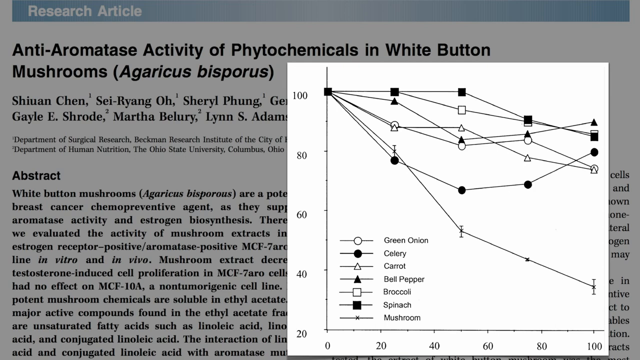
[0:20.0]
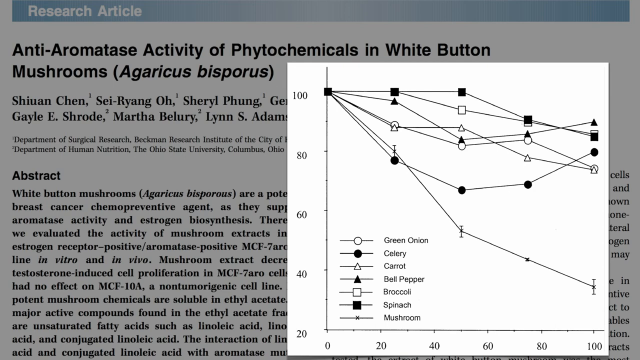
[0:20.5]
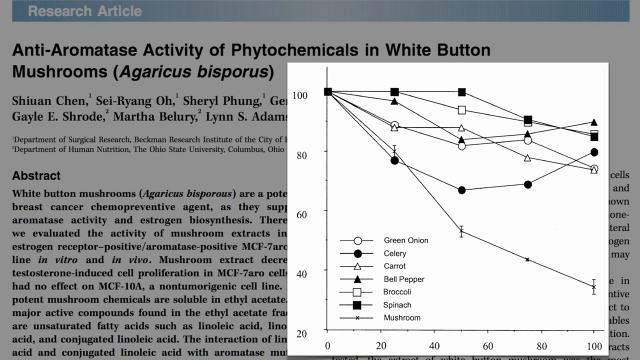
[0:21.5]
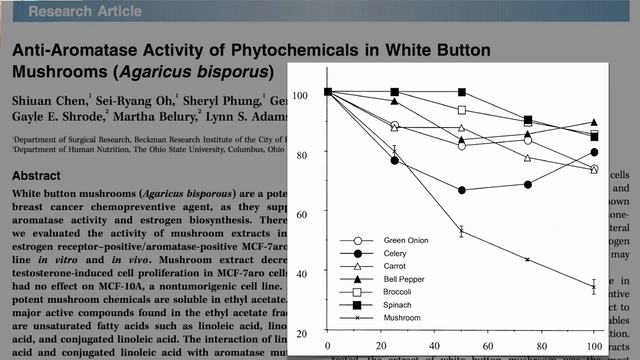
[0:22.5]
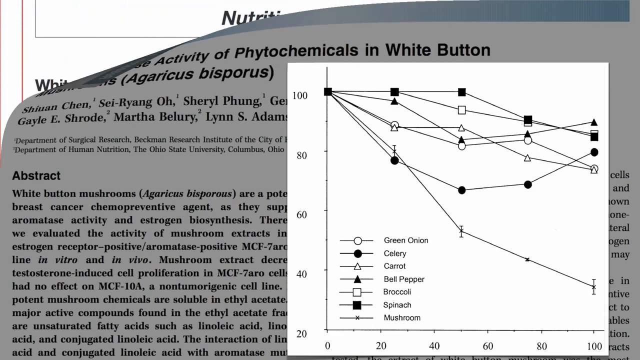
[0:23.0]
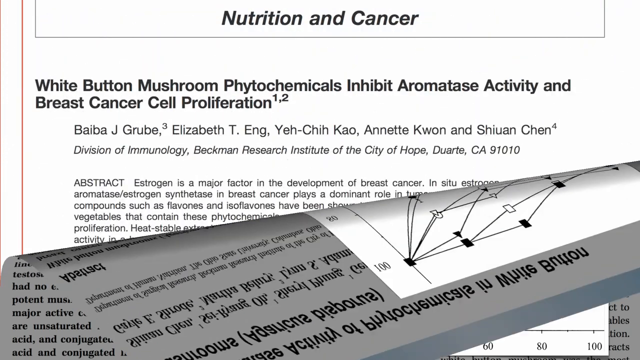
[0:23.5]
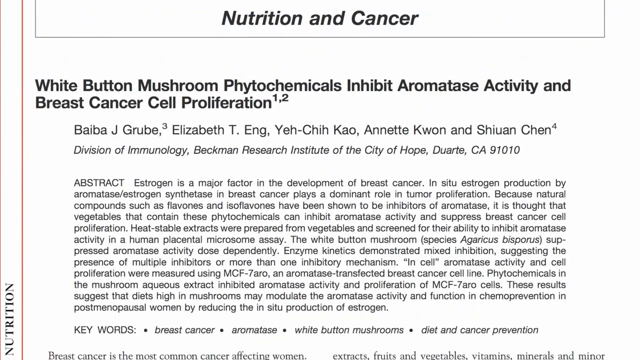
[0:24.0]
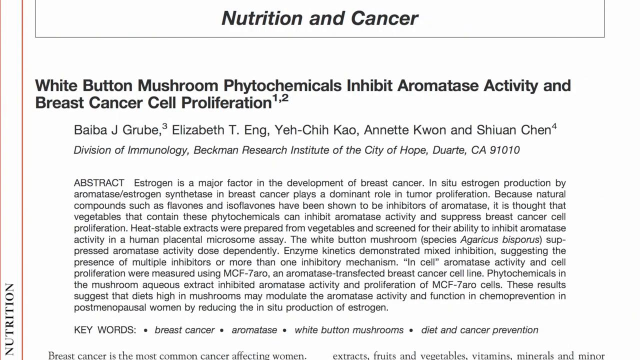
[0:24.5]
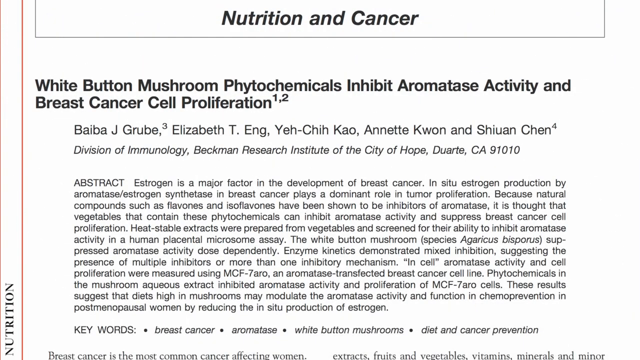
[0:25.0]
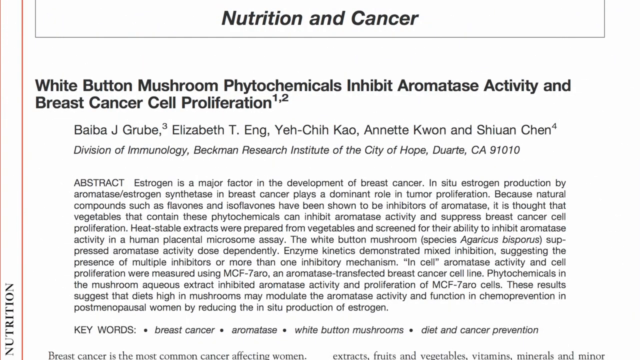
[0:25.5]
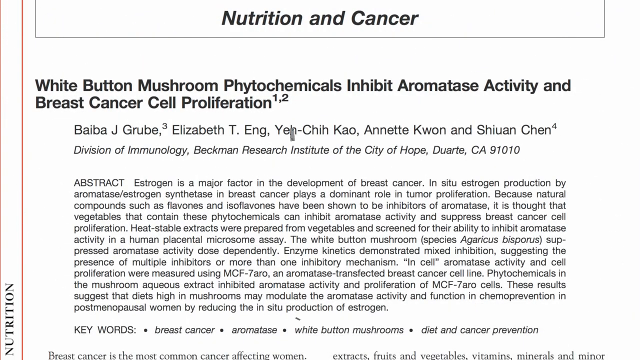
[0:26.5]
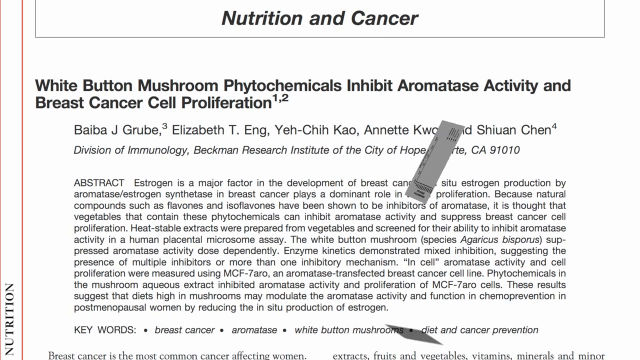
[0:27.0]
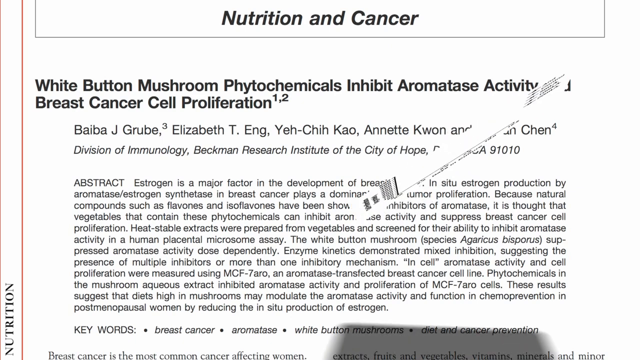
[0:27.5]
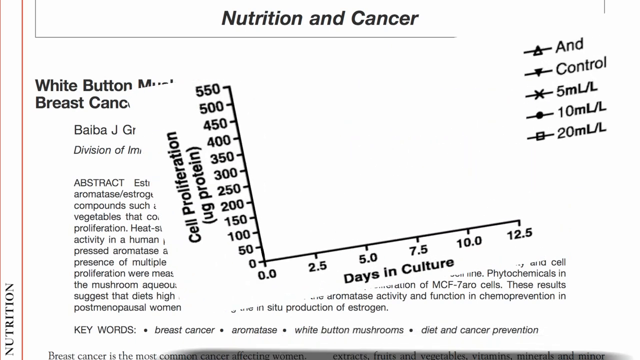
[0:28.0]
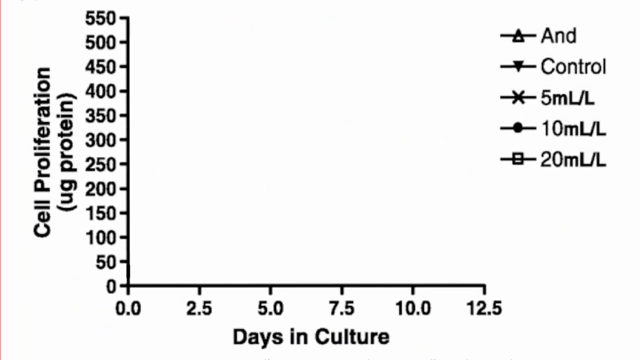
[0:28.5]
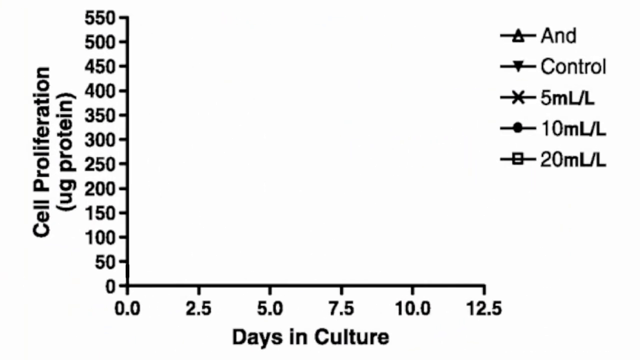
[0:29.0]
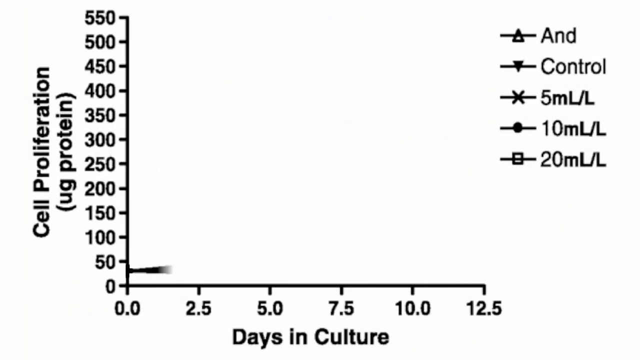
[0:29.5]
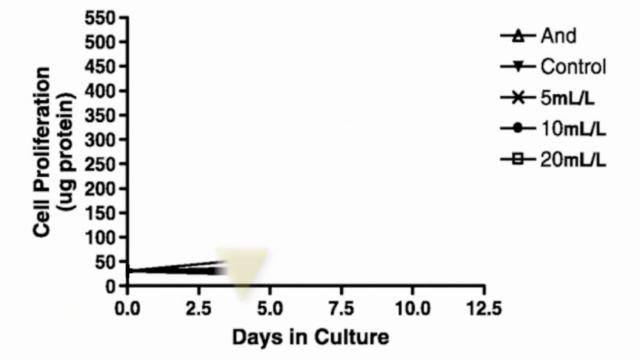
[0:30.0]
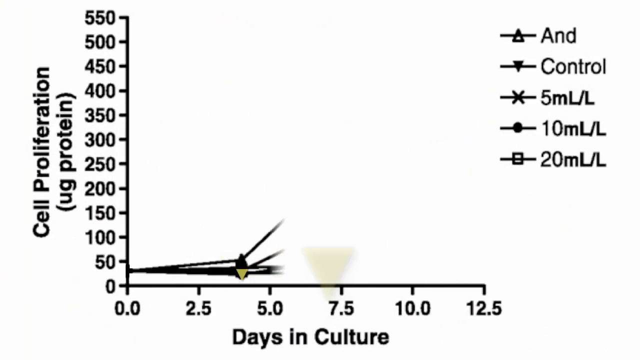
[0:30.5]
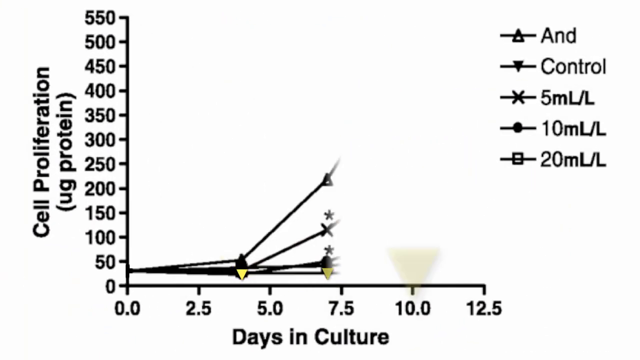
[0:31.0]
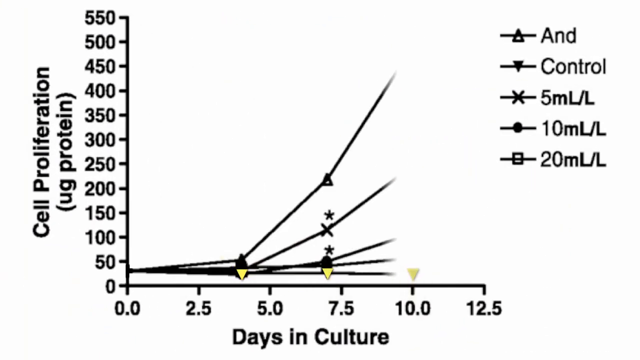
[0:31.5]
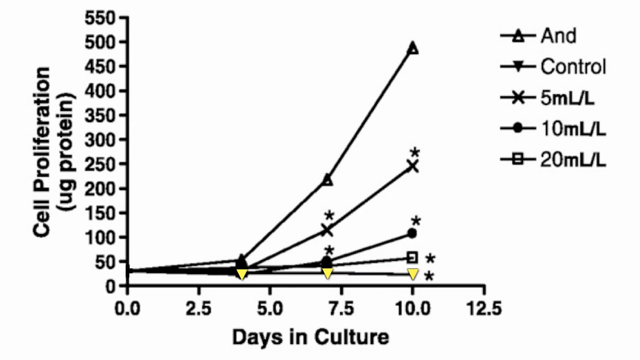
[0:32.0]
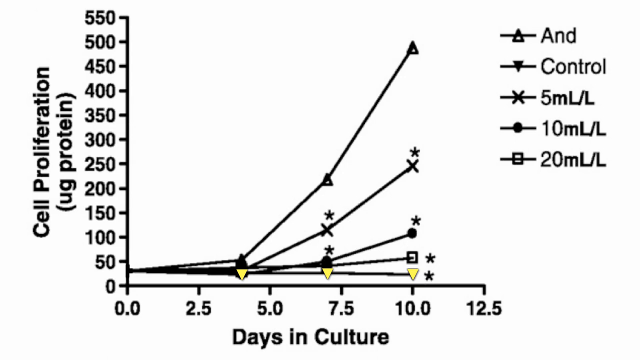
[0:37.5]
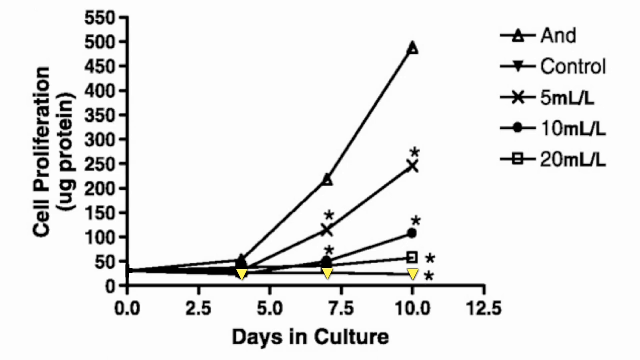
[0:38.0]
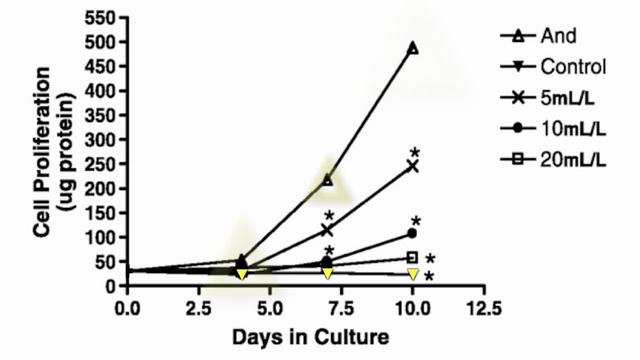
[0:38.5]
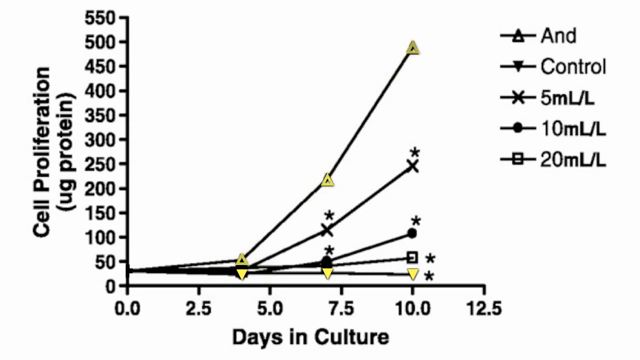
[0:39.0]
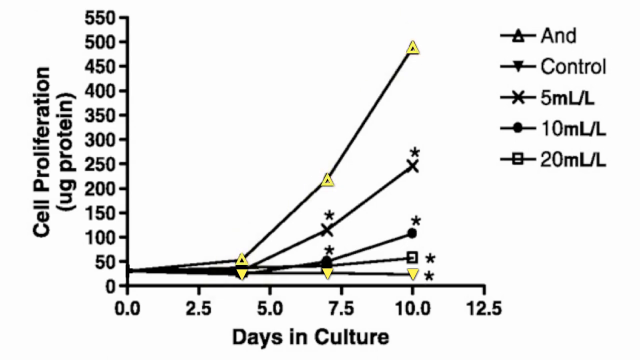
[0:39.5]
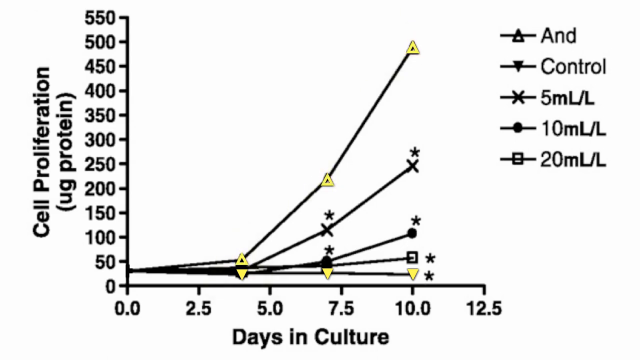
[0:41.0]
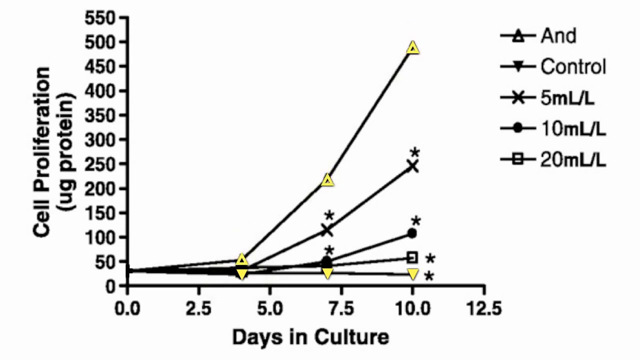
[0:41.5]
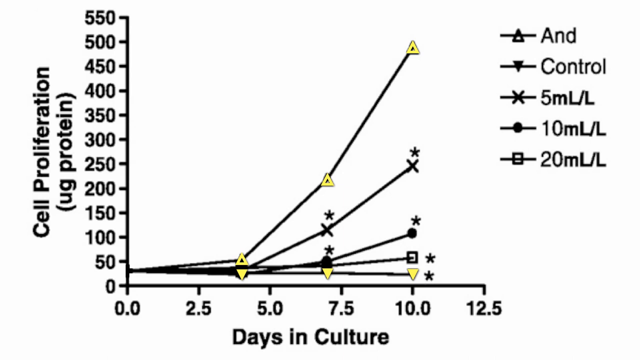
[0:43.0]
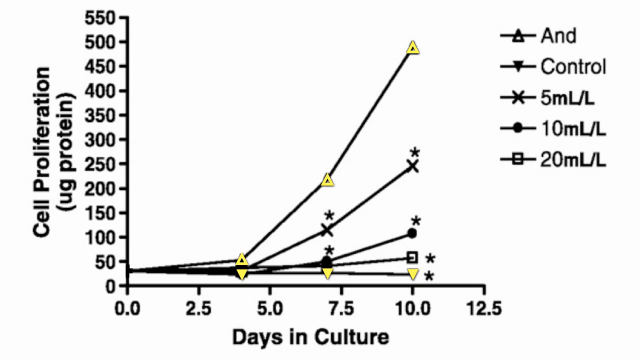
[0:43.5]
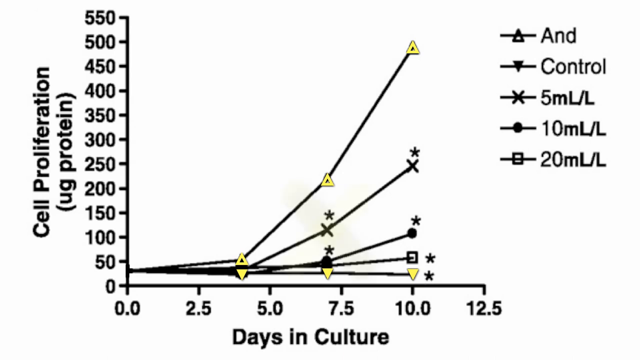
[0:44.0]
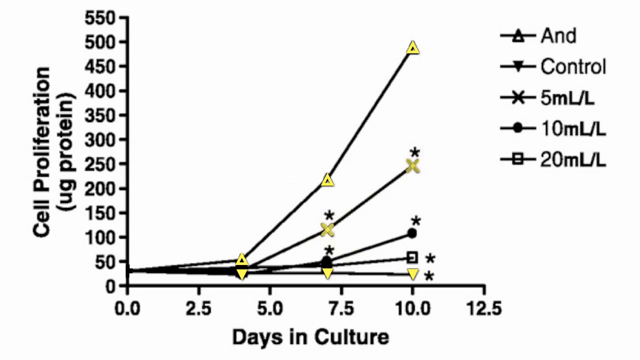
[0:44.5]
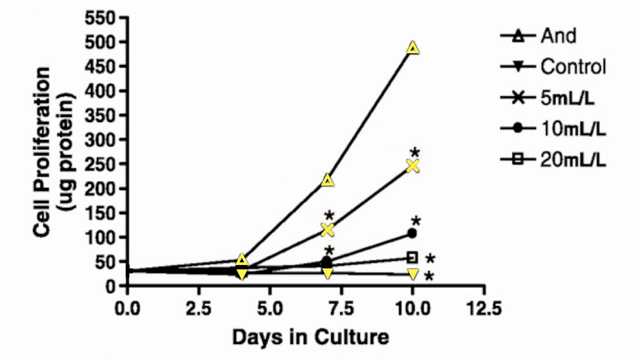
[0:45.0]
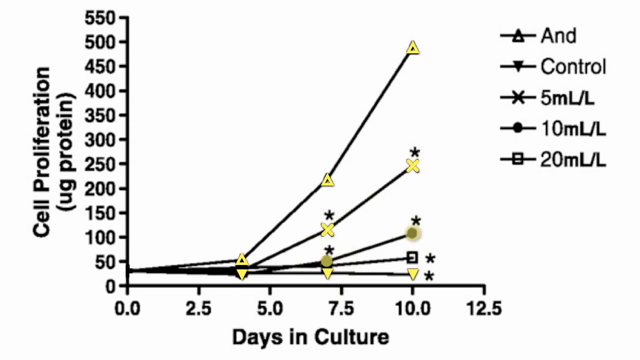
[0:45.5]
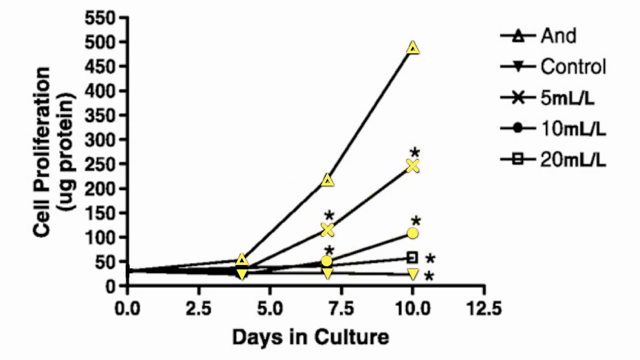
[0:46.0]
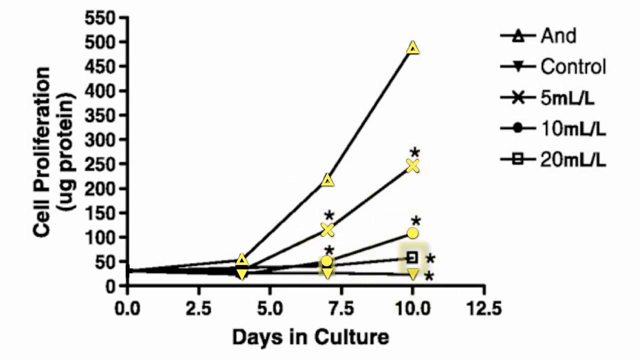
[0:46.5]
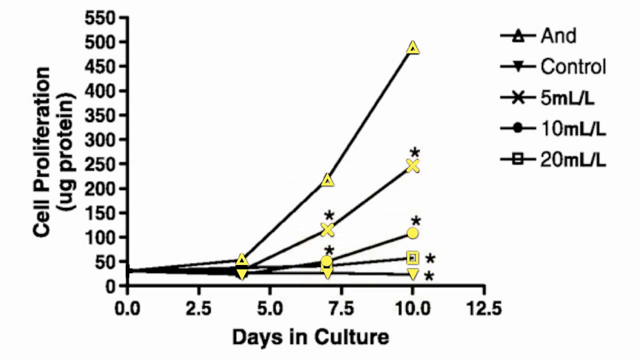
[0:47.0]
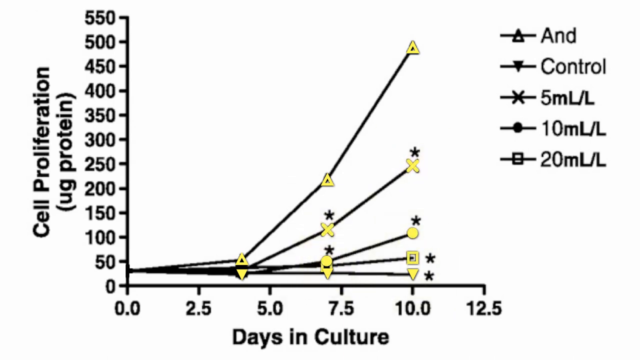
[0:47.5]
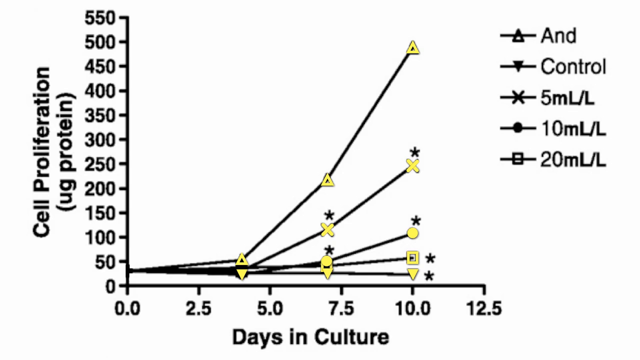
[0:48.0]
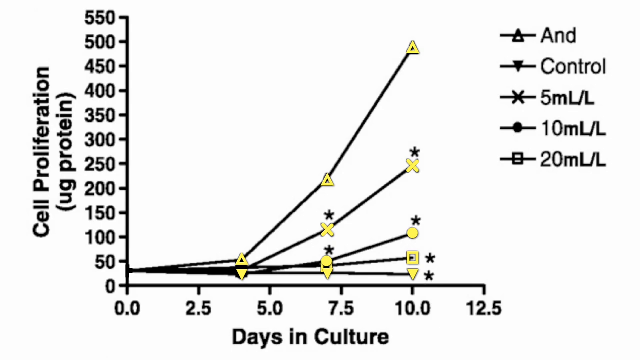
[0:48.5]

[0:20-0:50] An article is on the screen with a chart popped up on the right side of the screen in front of it. The chart has a legend listed from top to bottom, each entry with its symbol to its left: green onion, celery, carrot, bell pepper, broccoli, spinach, mushrooms. The vertical axis shows the number intervals 40, 60, 80, 100 from bottom to top. The screen then transitions to show the details of the article's abstract, with the words "nutrition and cancer" at the very top of the screen. The abstract title stays in view for about three seconds before another chart pops up. This chart's vertical axis is numbered 0, 50, 100 and on in intervals of 50 up to 550 at the top, and its label reads "cell proliferation." Graph lines then begin to appear on the chart from the 50 mark of the vertical axis and project out as five different graph lines.